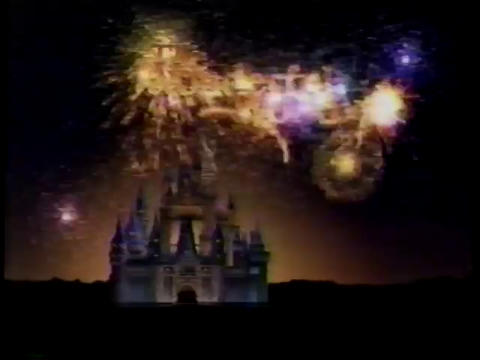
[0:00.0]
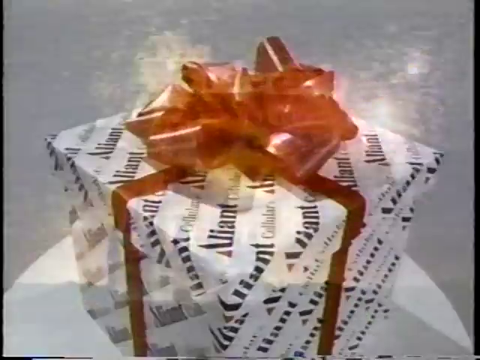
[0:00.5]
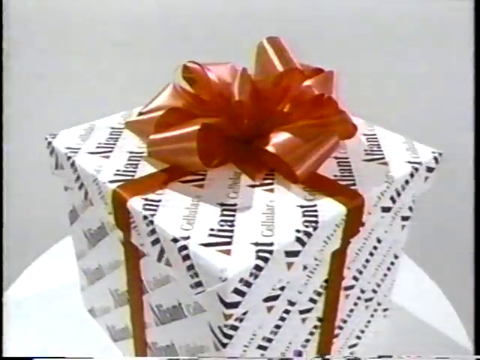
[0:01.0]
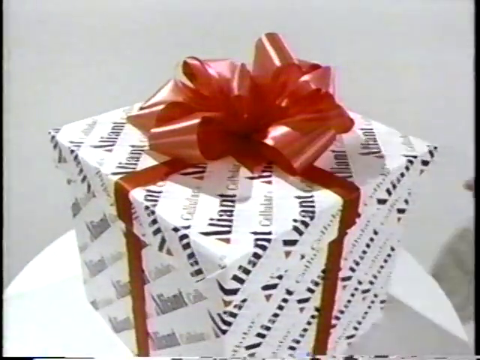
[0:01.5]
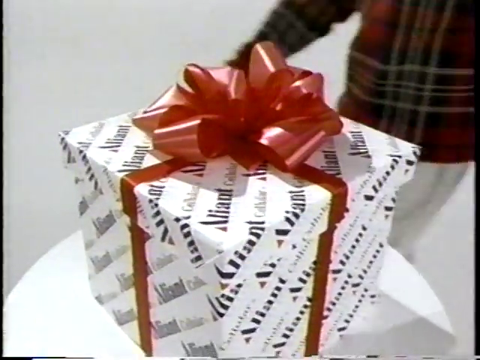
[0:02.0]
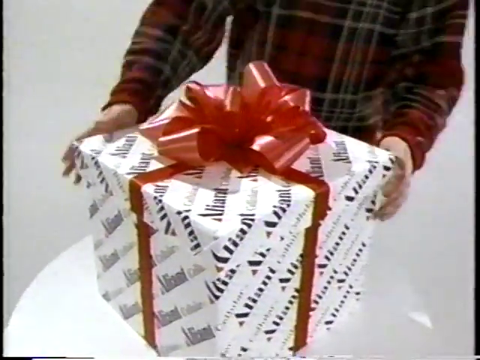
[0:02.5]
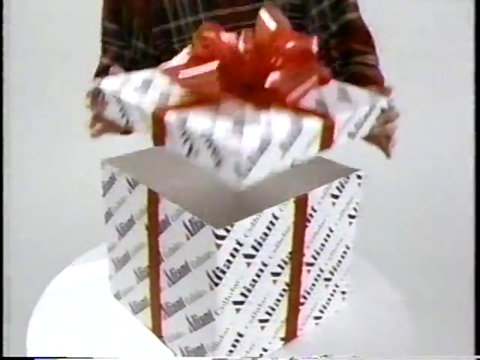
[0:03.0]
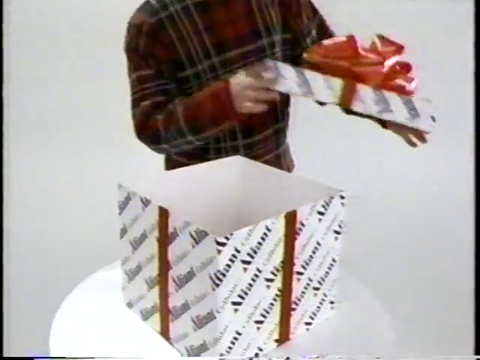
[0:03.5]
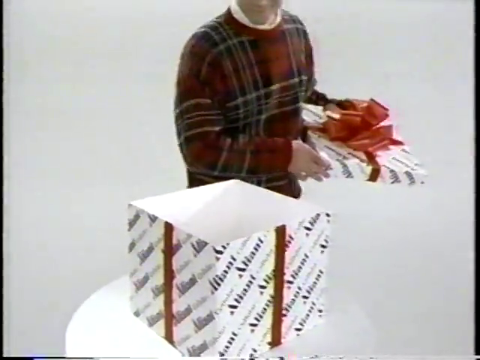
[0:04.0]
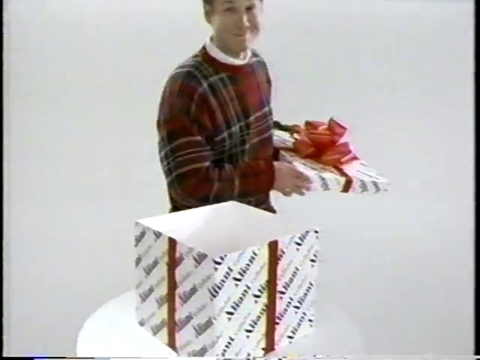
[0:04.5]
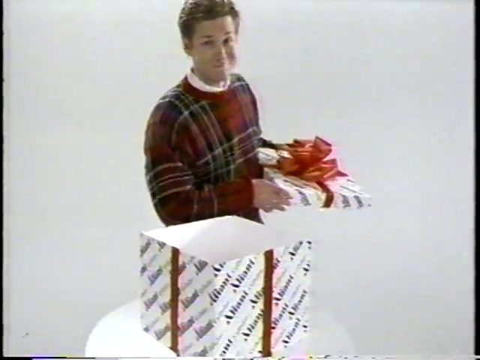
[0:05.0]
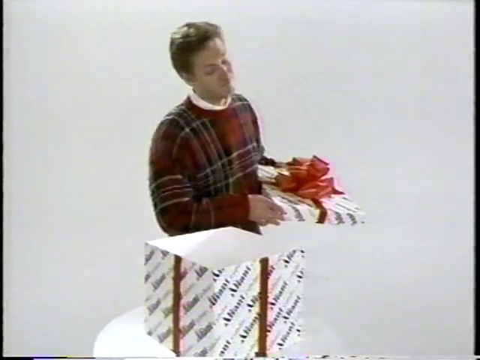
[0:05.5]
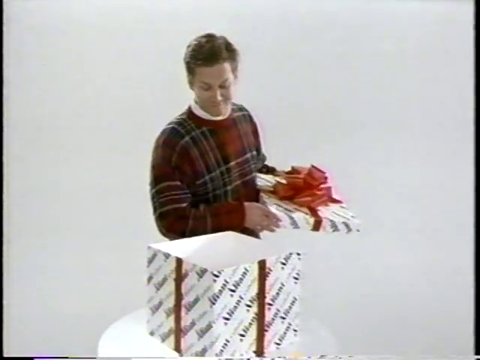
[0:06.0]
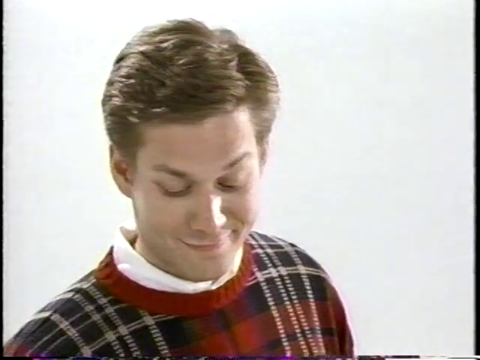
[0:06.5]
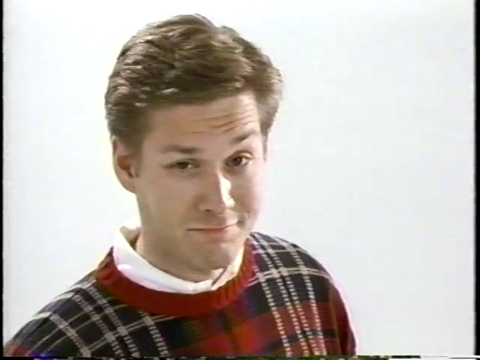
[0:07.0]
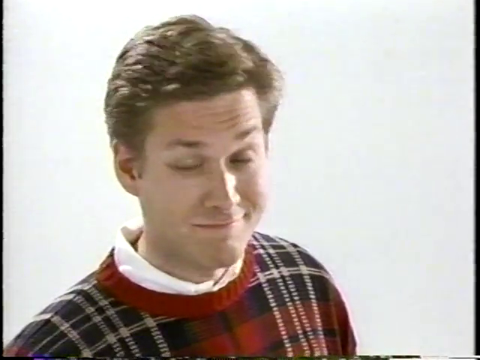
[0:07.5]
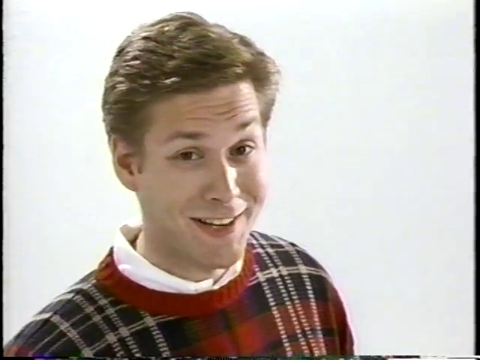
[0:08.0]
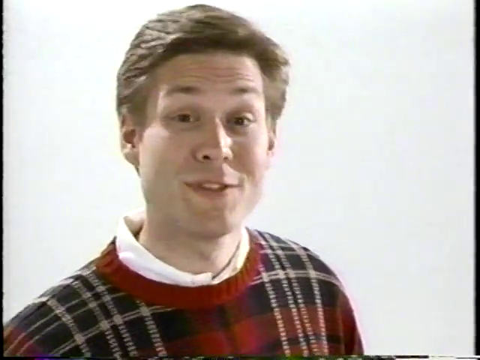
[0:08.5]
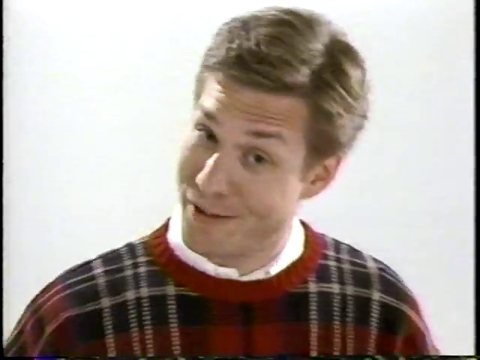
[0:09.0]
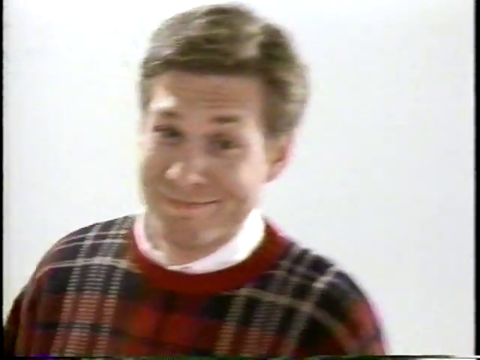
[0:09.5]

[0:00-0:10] The video opens on what looks like a castle at night with fireworks going overhead, somewhat digitally made. Suddenly a square wrapped gift box with a red bow appears; there is writing on it that apparently reads "Alliant Collectibles." A man walks out from the right side of the frame and takes the top off the box. He is Caucasian with brown hair and wears a tartan sweater over a white collared shirt. The advertisement looks somewhat dated because of his hairstyle and the color of the video.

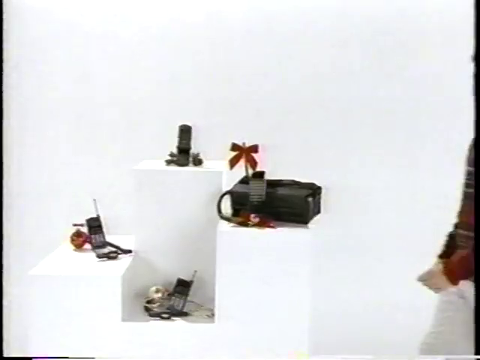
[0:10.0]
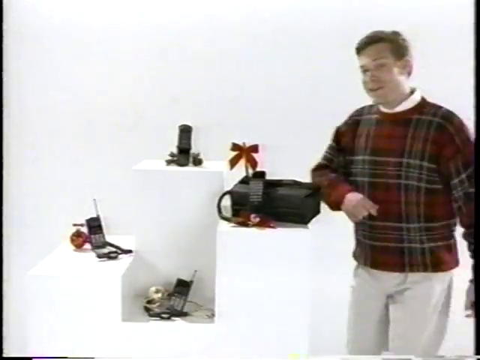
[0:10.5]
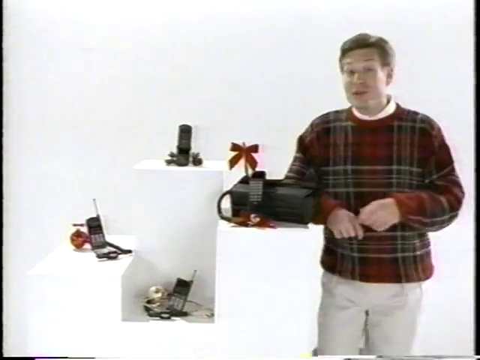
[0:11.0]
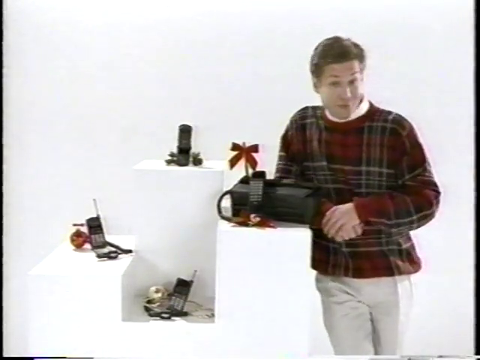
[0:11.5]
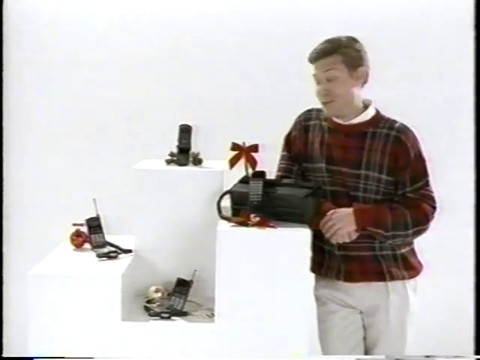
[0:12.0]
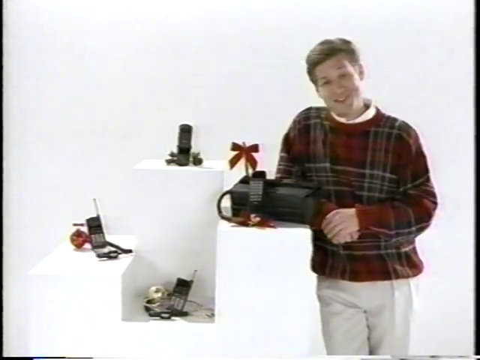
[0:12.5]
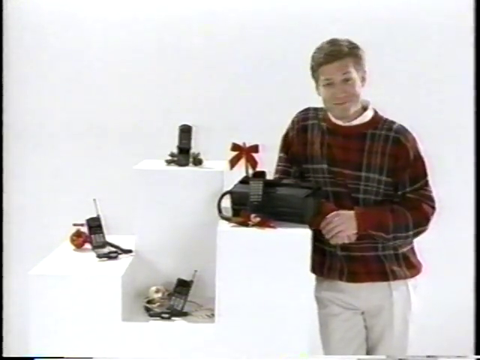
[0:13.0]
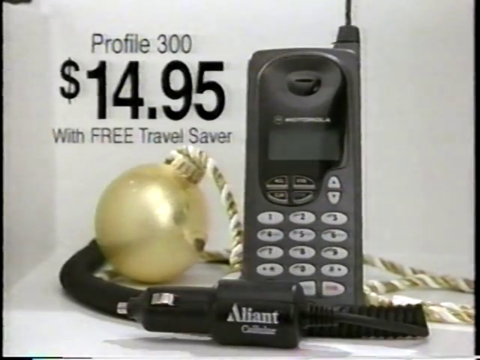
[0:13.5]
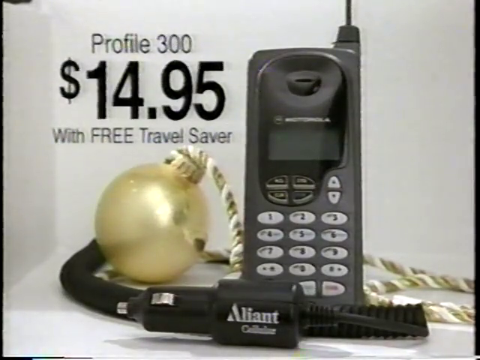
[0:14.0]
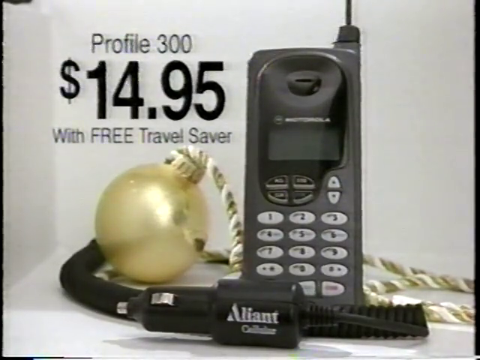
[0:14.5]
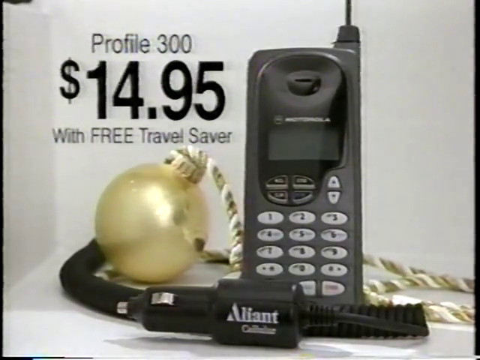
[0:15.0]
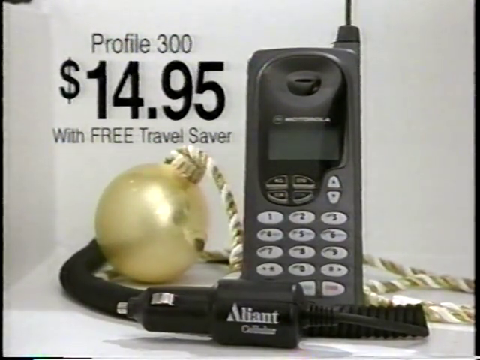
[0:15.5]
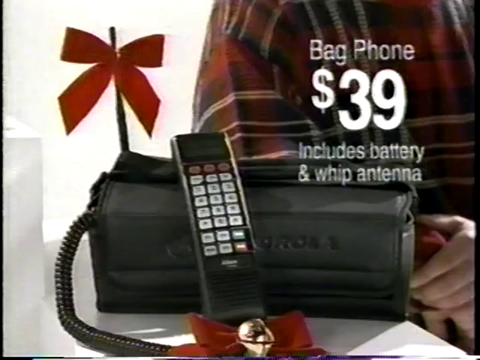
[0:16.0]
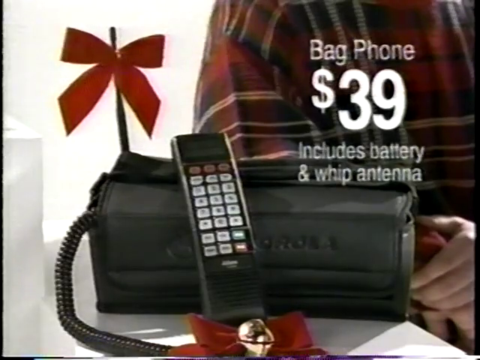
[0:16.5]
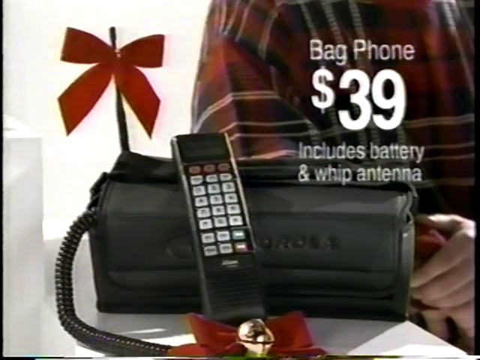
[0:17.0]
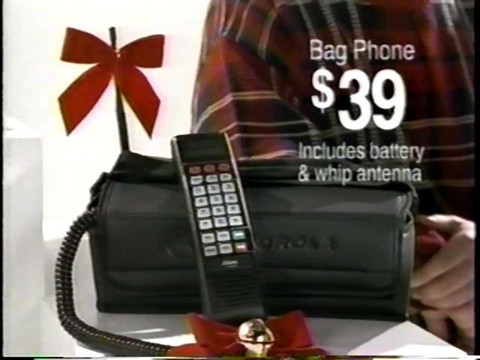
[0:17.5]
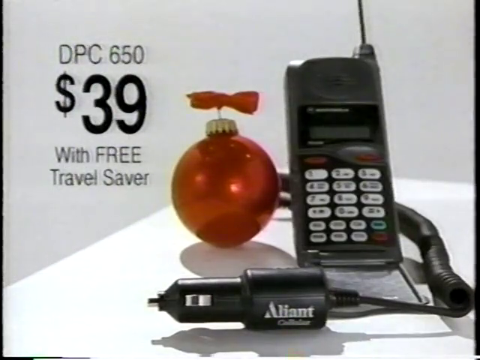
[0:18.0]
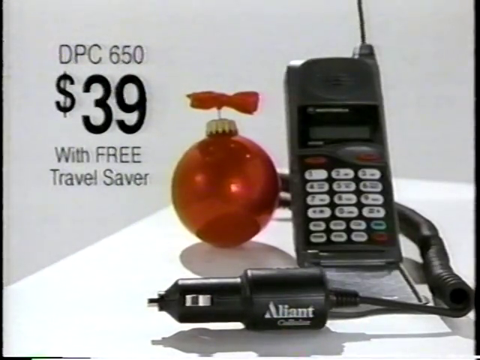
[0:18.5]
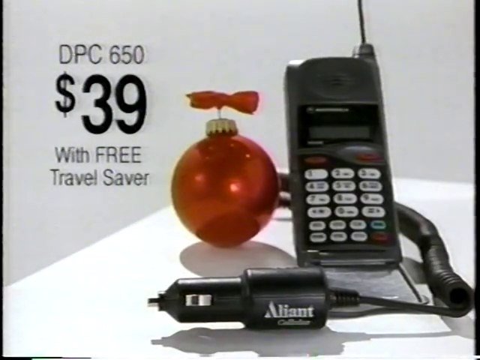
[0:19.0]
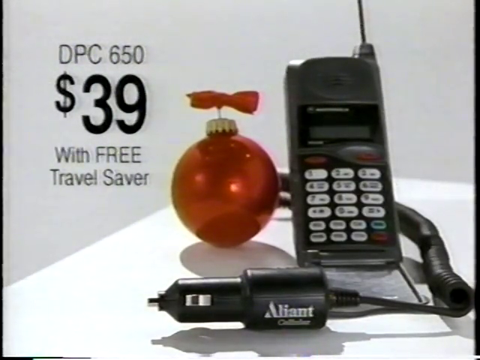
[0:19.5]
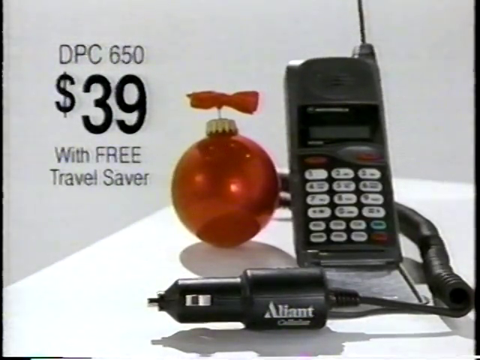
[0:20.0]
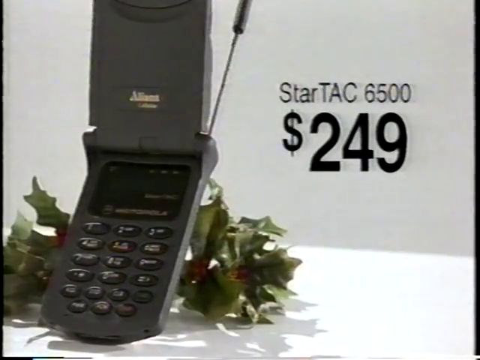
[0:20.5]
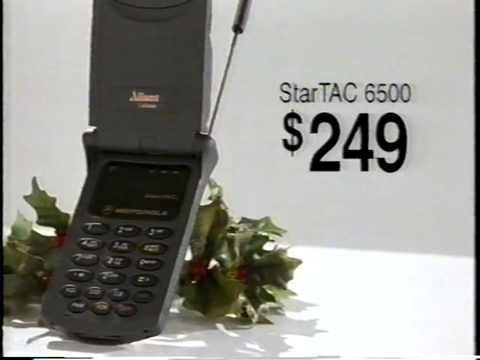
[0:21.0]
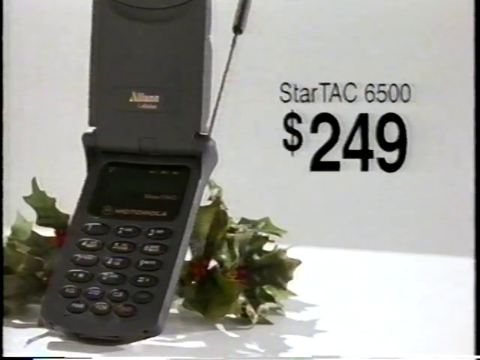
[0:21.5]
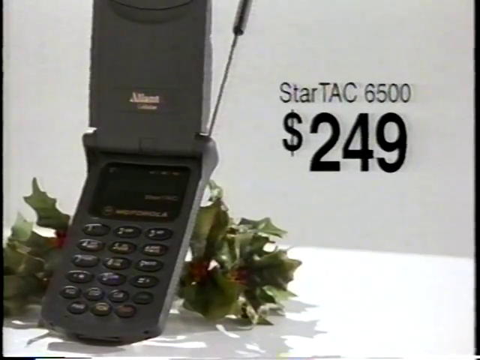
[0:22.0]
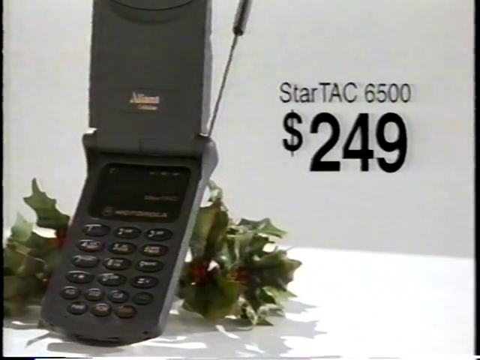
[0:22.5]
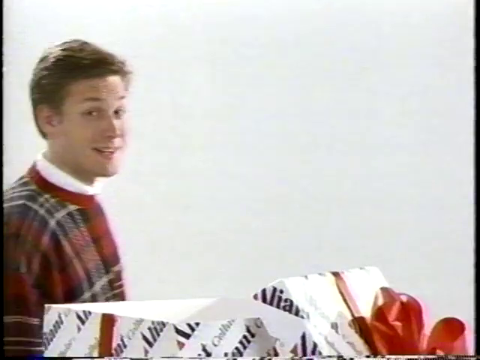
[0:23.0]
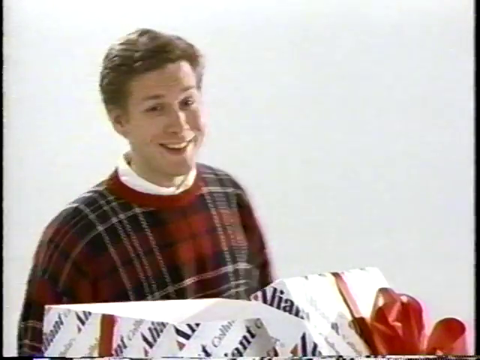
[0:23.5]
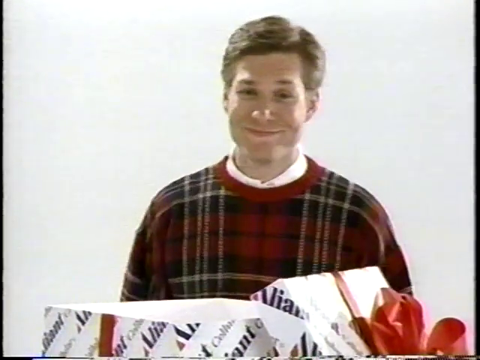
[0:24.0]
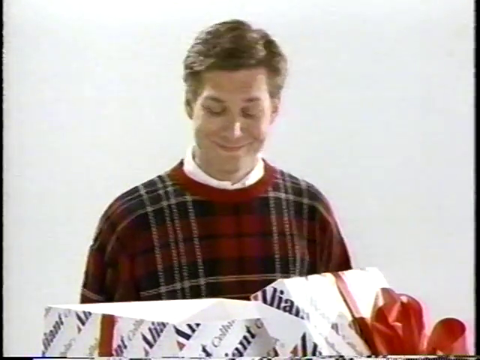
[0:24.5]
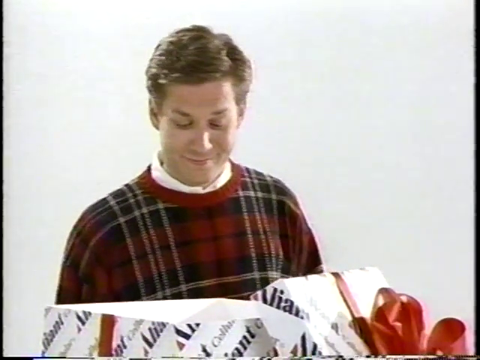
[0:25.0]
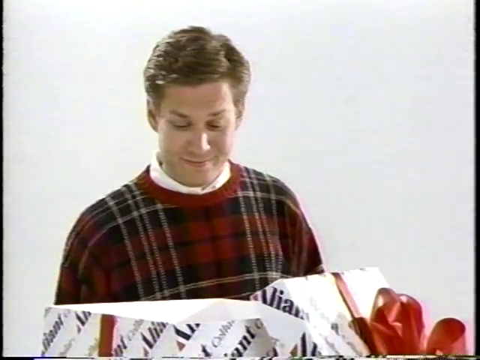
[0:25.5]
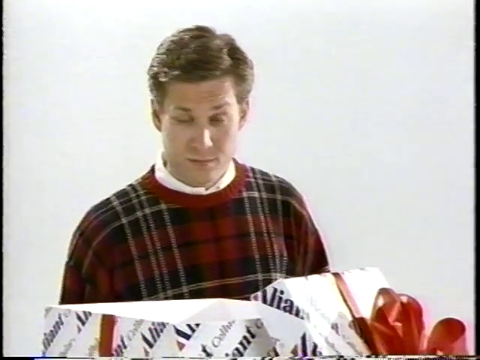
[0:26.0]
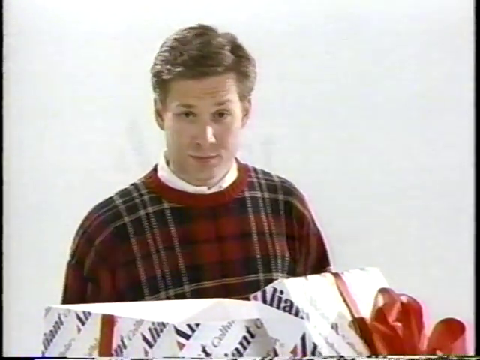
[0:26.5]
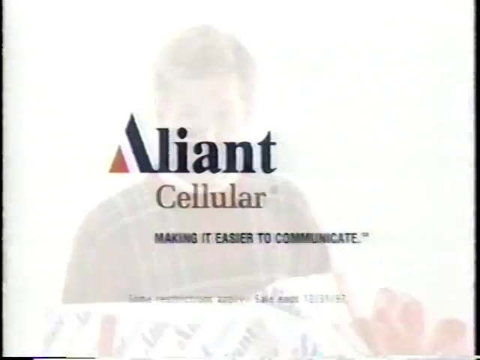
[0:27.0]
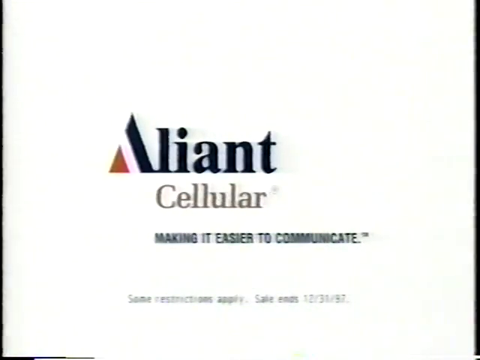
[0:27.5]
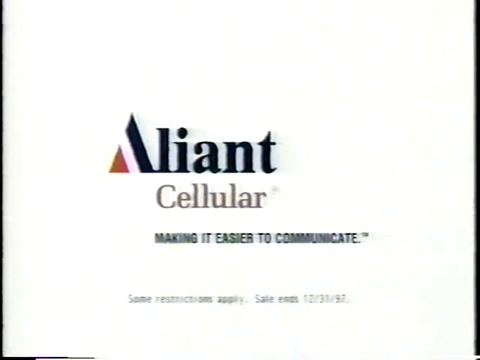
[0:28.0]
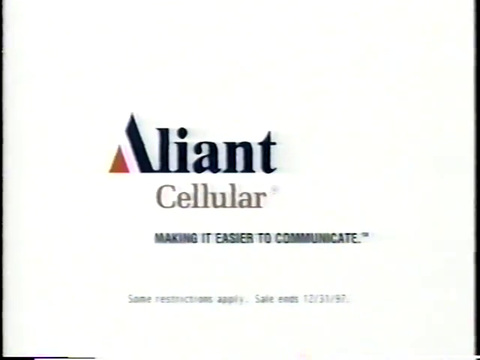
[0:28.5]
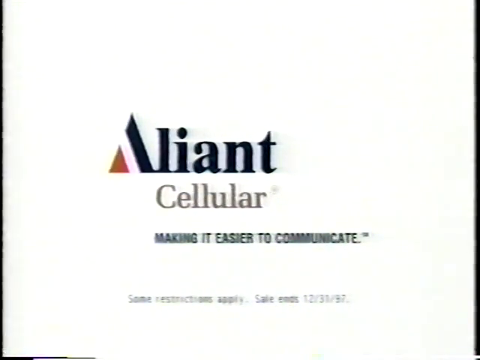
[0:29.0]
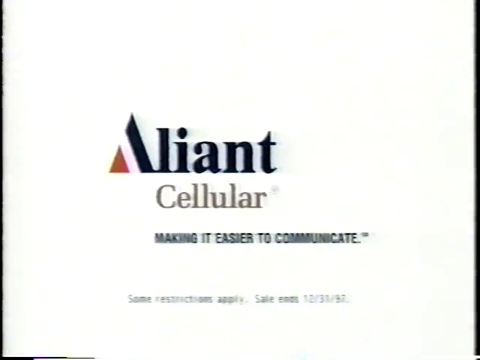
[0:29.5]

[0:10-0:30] A solid white background holds a tall, rectangular white column on which electronics are displayed. The image is a bit fuzzy and of poor quality, and the commercial looks somewhat dated, perhaps from the 80s. A man comes in from the right side of the room and stands at the front right of the display. The electronics appear to be early cell phones from the days when flip phones were common; there are four of them, all black. The man, probably around 30 years old, wears a tartan sweater suggesting holiday time. A close-up of one phone shows "StarTAC" written in black text with "6500" as the model, and a price of "$249" listed to the right in bold black text. It is a flip phone with an antenna coming out on its right side. The man walks up to the gift box, which is now open, and smiles a little. A white background then shows the logo "Alliant Cellular" with "making it easier to communicate," the small text "Some restrictions apply," the sale end date "ends 12-31-97," and "Alliant Cellular, www.AlliantCellular.com."